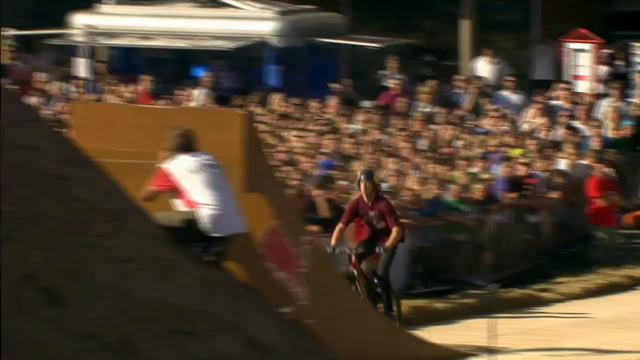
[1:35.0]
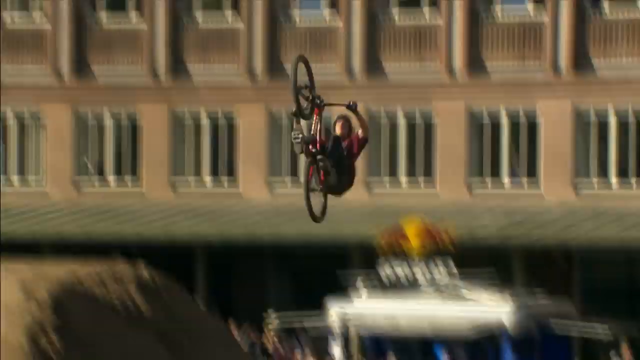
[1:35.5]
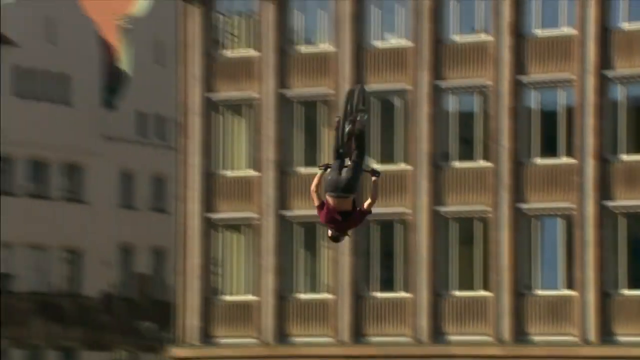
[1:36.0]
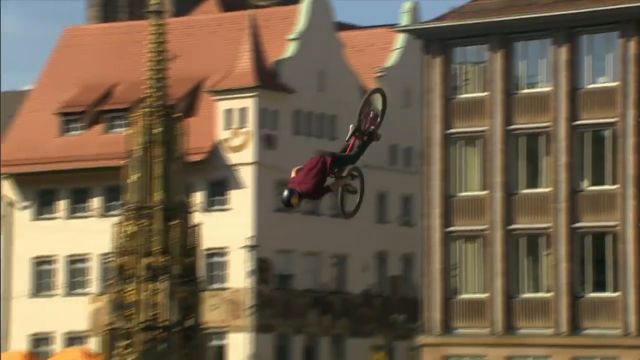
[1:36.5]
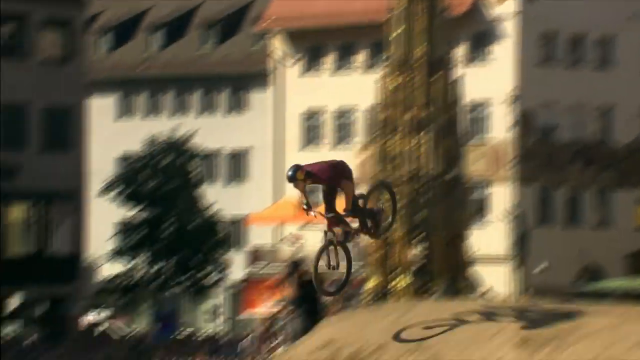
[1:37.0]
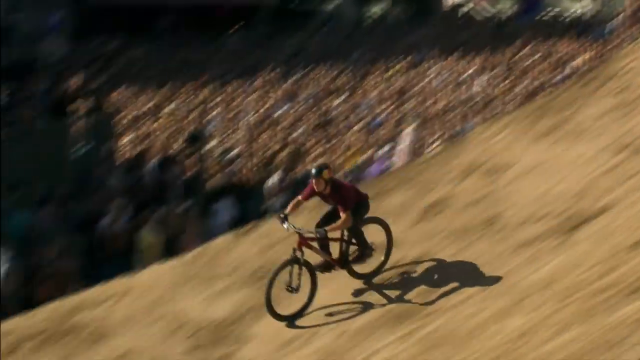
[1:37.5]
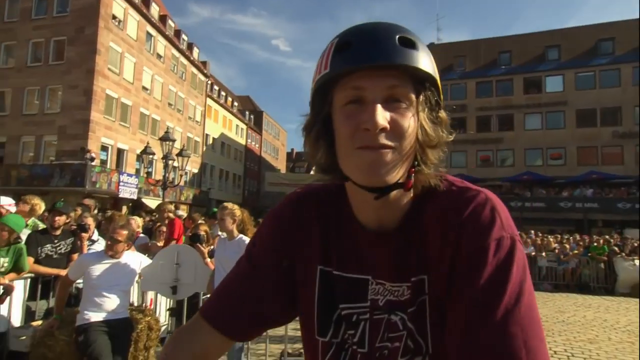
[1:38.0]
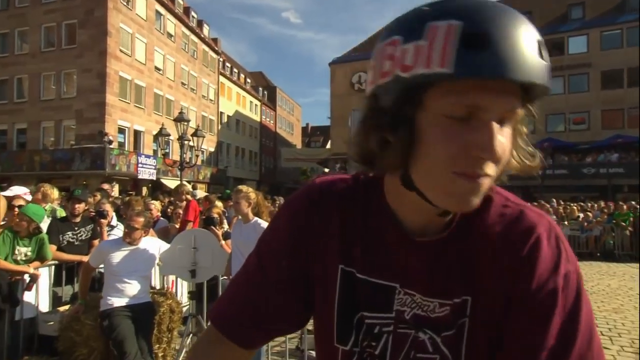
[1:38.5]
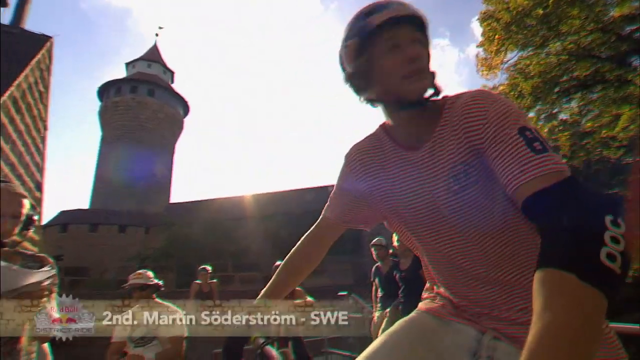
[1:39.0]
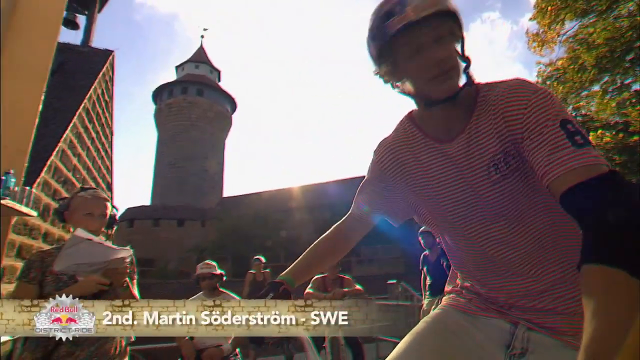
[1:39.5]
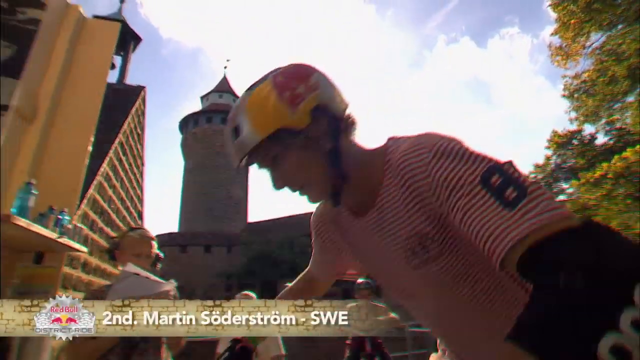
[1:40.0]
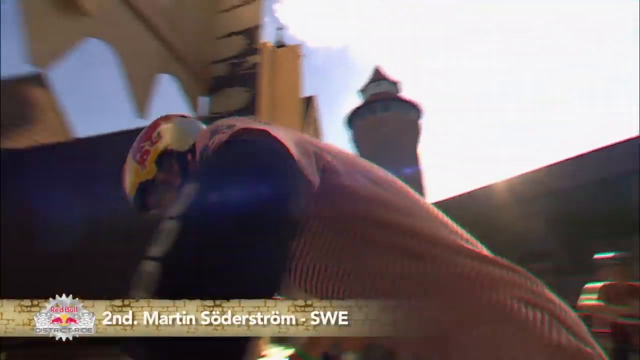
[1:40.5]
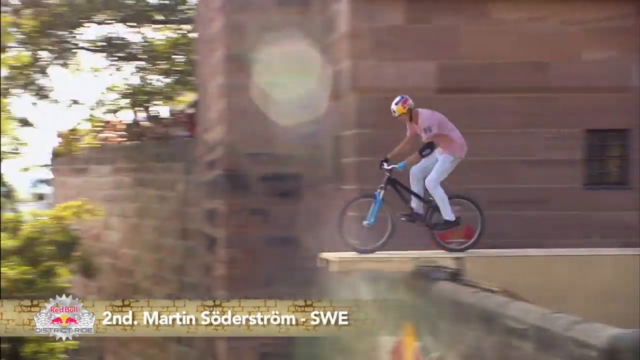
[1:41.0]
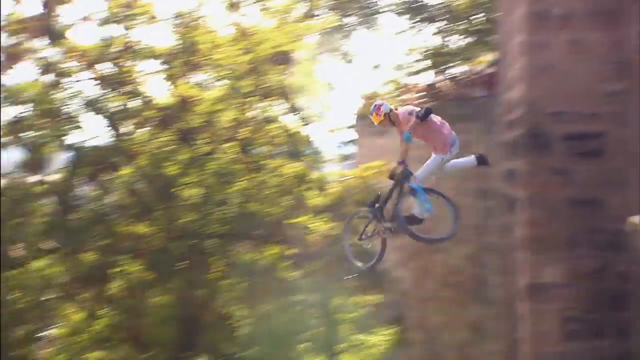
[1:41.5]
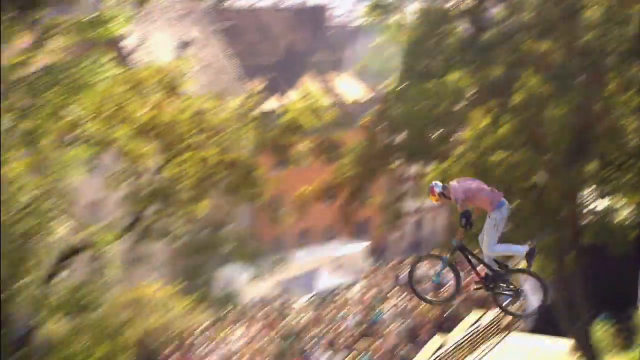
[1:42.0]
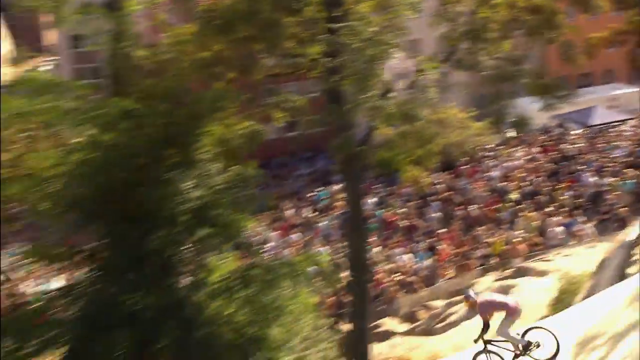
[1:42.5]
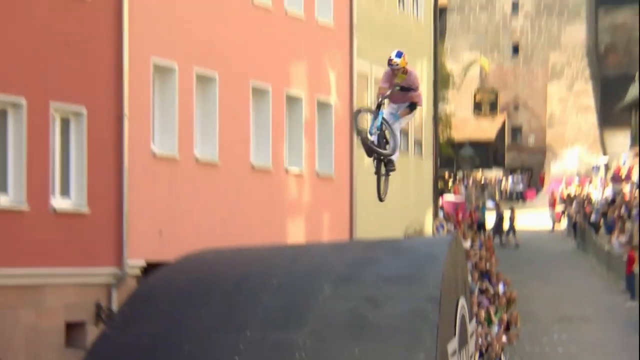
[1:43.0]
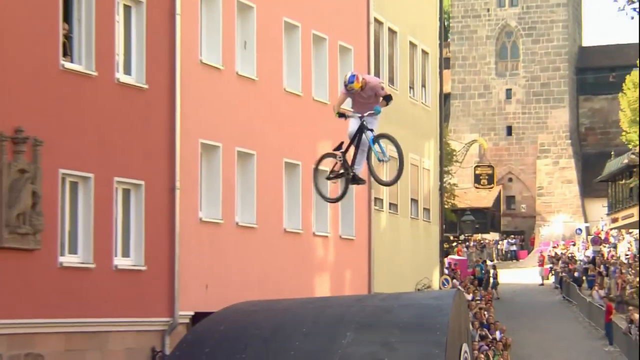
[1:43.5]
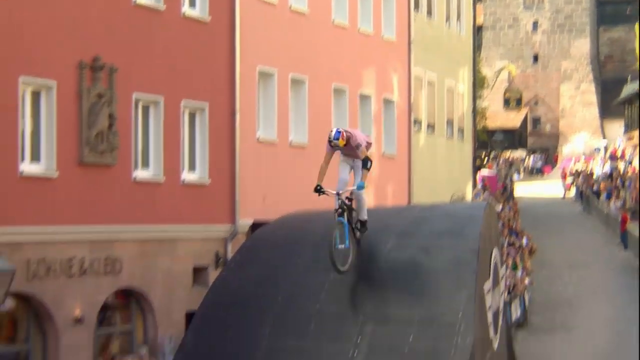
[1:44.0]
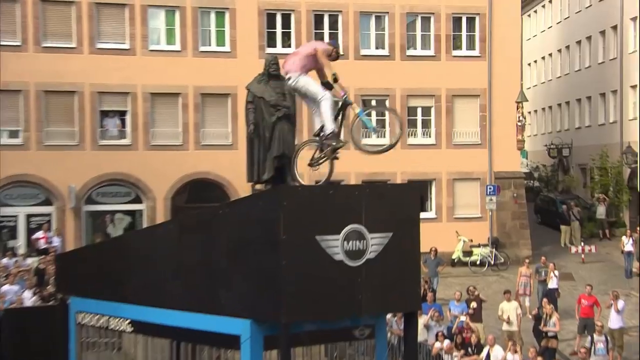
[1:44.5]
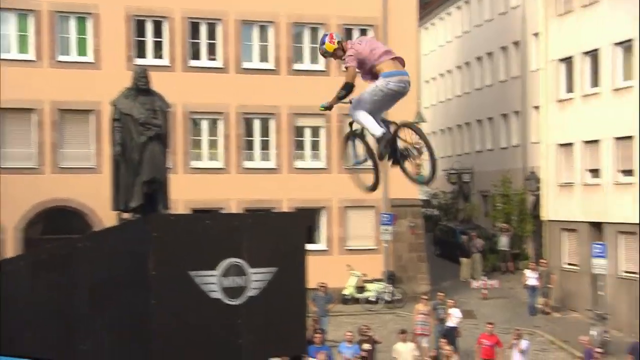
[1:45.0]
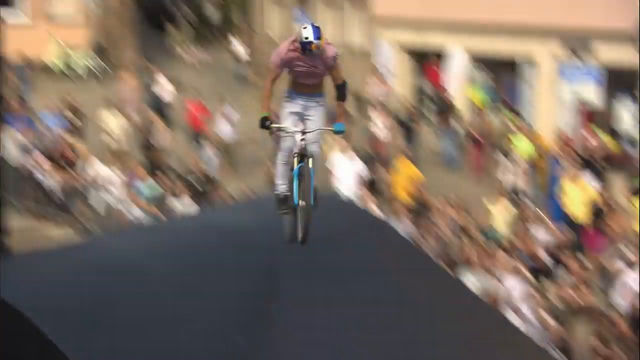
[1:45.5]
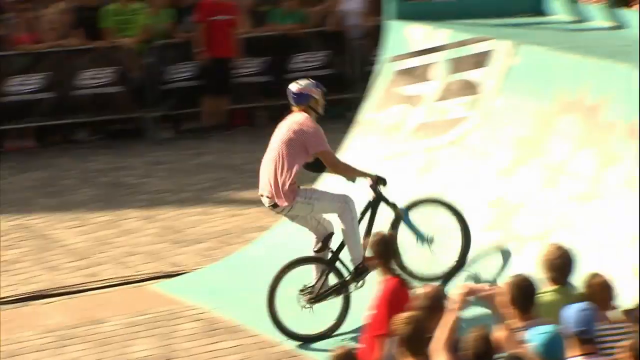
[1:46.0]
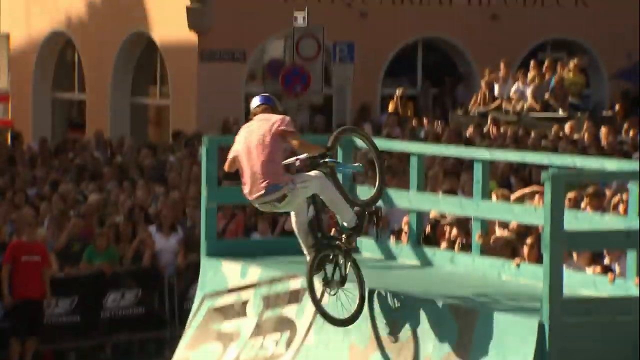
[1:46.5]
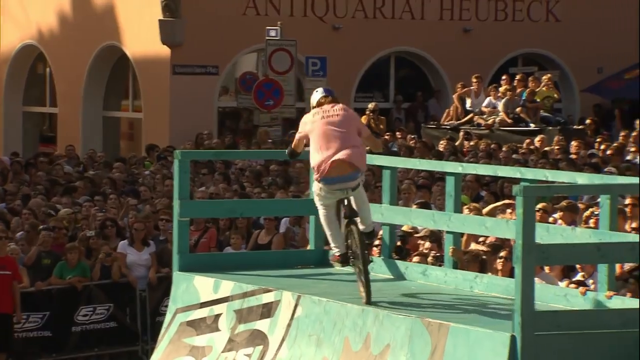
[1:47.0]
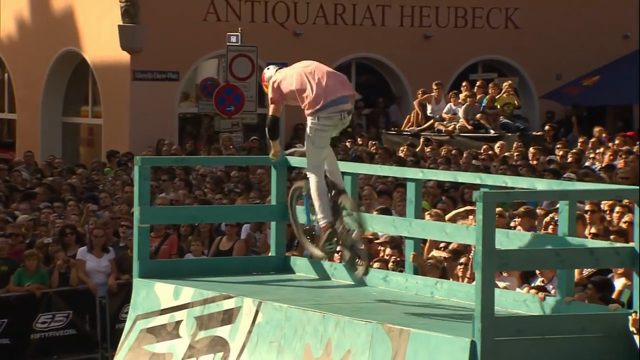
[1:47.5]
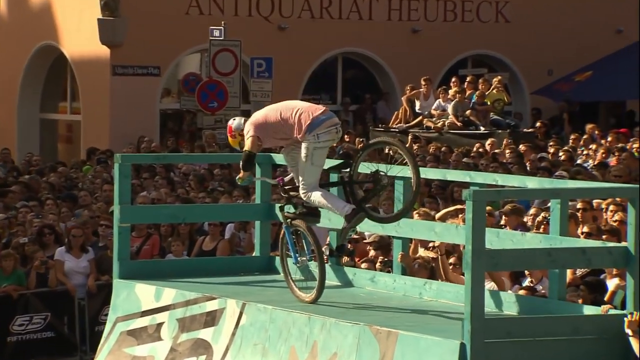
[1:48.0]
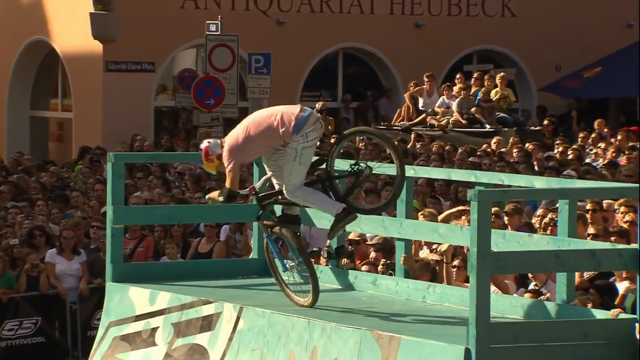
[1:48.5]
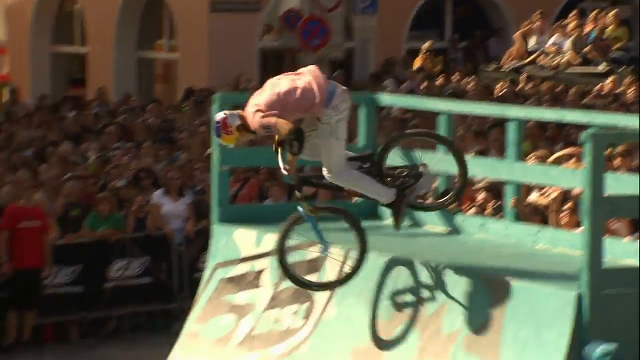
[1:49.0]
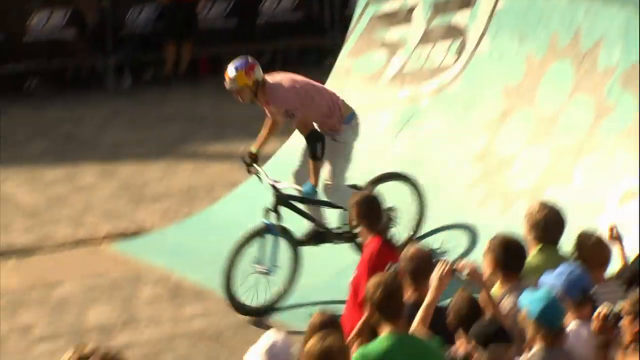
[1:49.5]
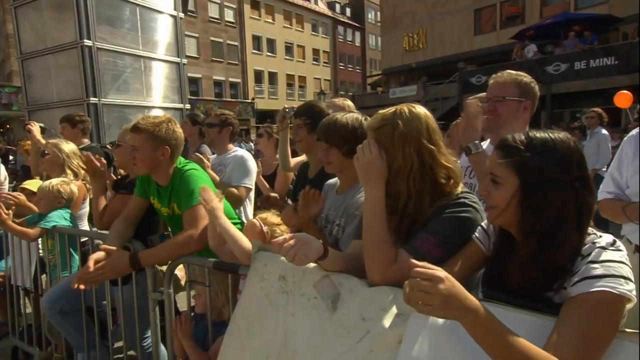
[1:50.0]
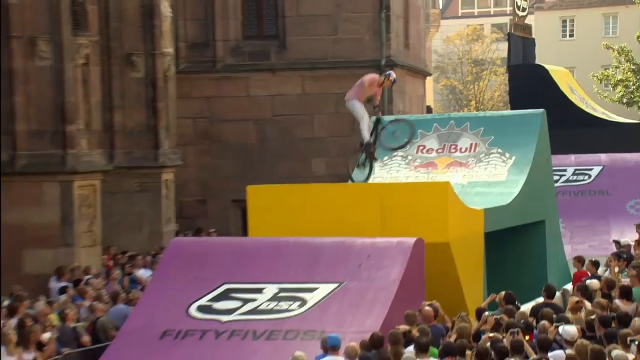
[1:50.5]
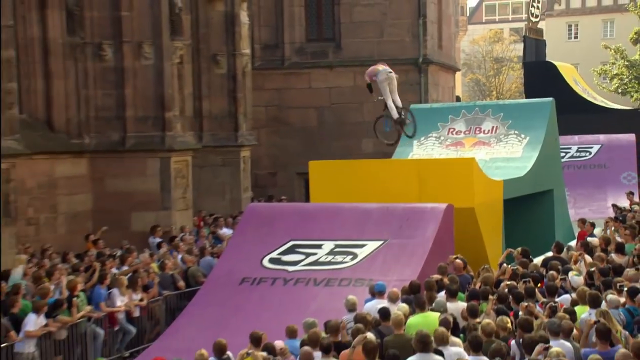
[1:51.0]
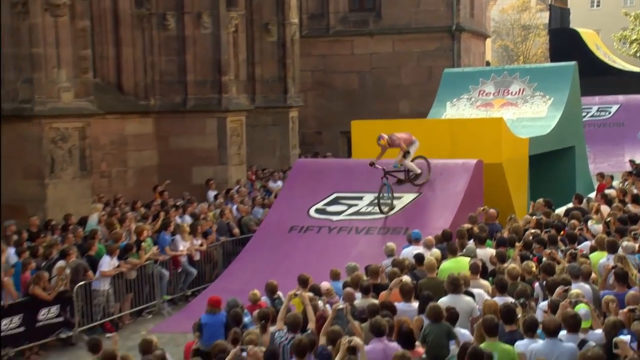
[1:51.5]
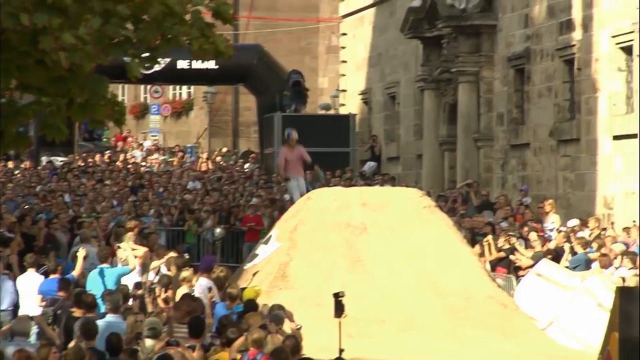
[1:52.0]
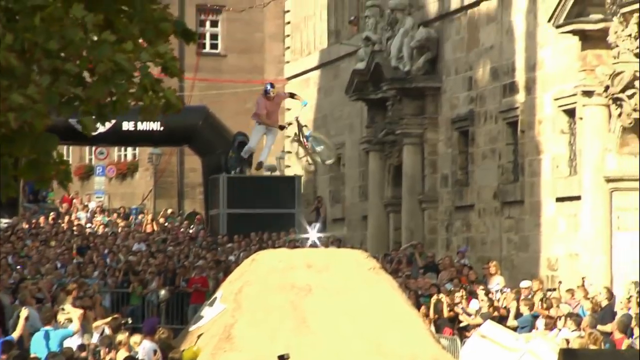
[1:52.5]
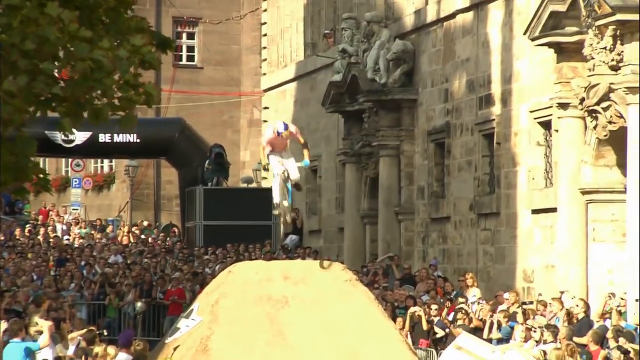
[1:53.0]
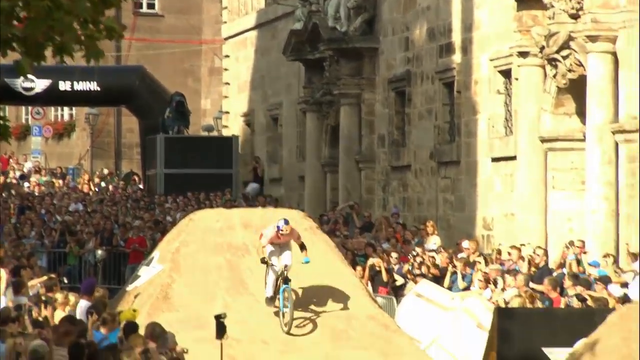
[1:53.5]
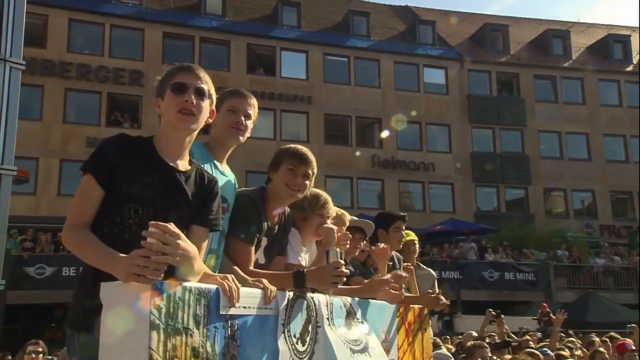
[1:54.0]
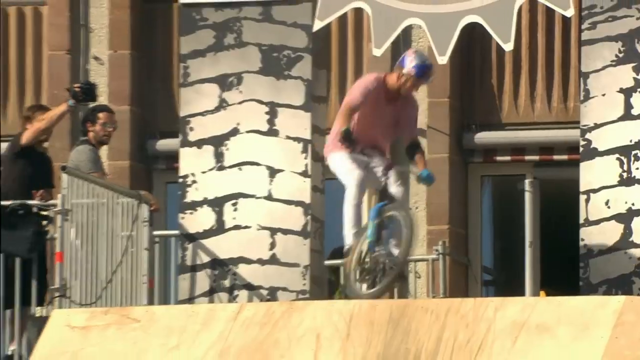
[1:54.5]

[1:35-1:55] At an outdoor Red Bull event, extreme sport bikers do spins, jumps, twists and even full-circle upside-down twists on their bikes. Some wear Red Bull helmets, and the Red Bull emblem appears in the corner. Many riders use the ramps to gain acceleration, then flip and land properly so the bike gets them safely down to the bottom of the ramp. A huge crowd is squished together to watch the event live. Some ramps are teal colored; some are small and some are very large with an extended ramp. The event is right in a city, with buildings full of windows in the background.